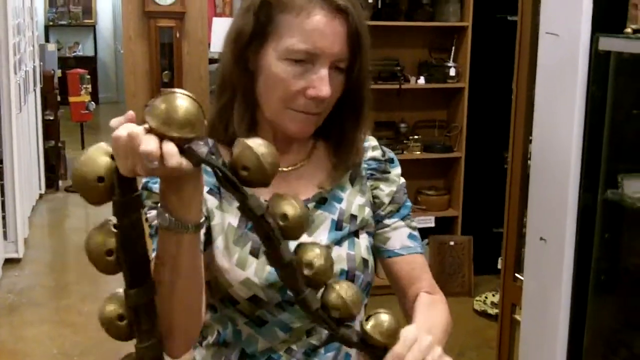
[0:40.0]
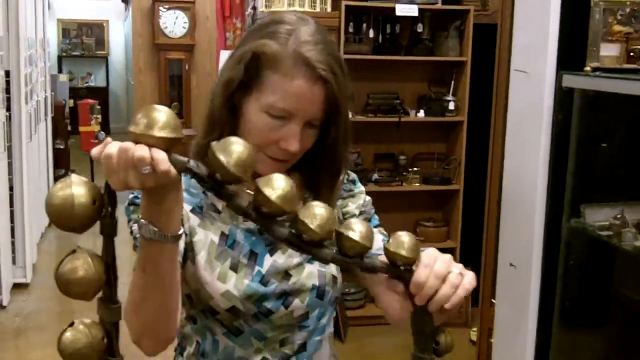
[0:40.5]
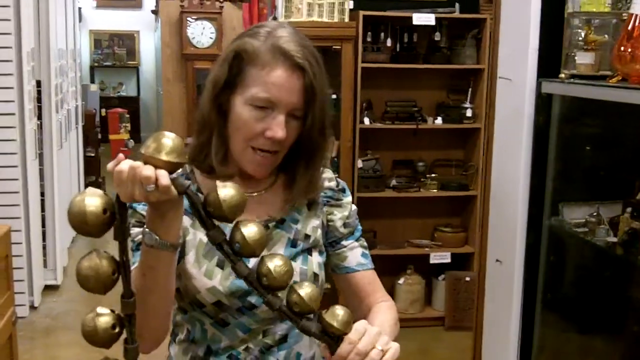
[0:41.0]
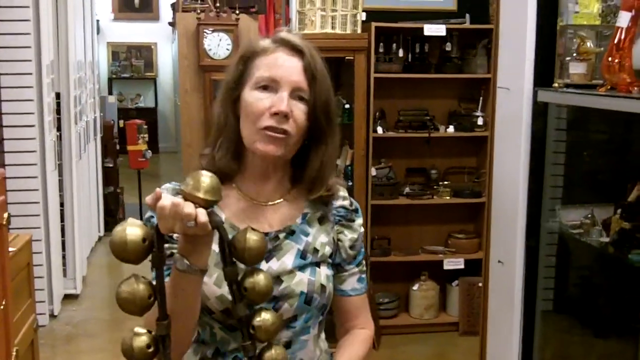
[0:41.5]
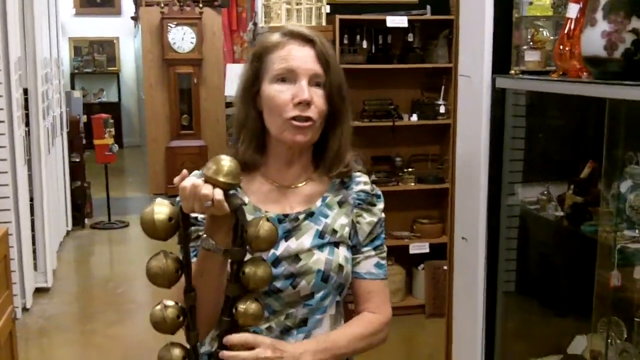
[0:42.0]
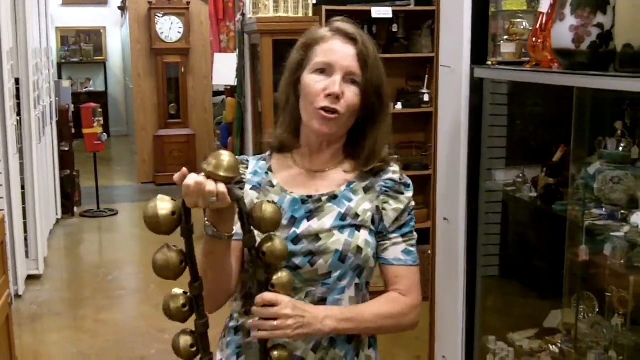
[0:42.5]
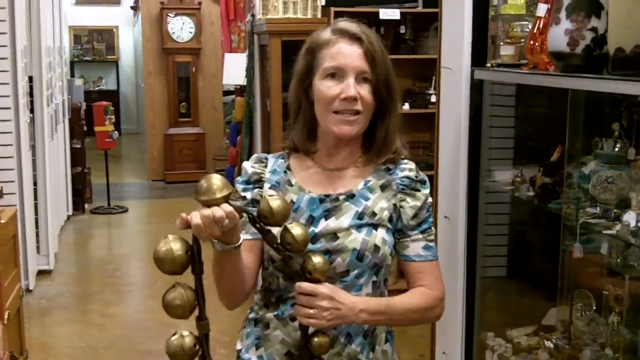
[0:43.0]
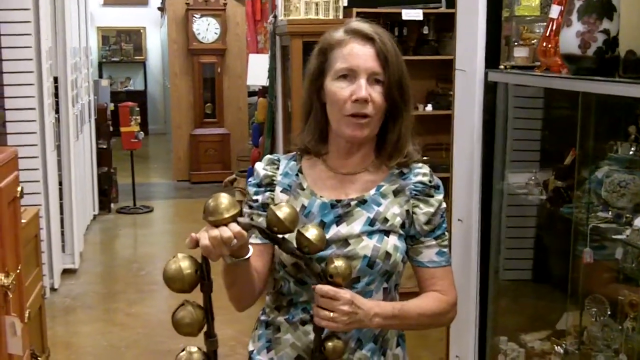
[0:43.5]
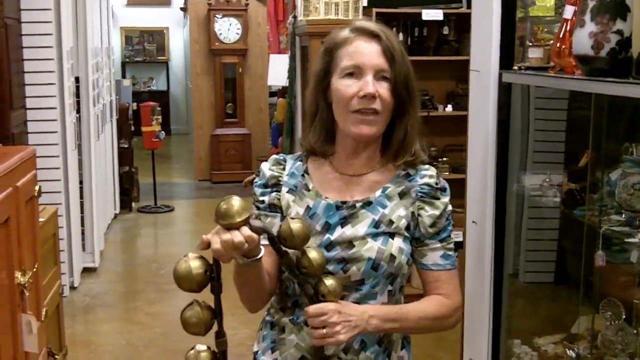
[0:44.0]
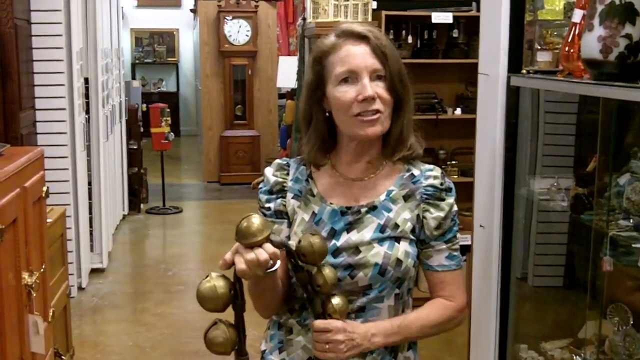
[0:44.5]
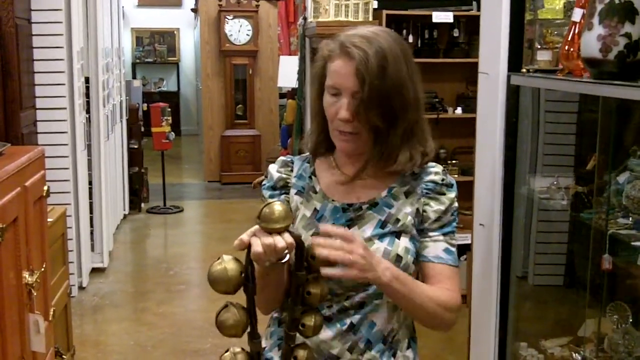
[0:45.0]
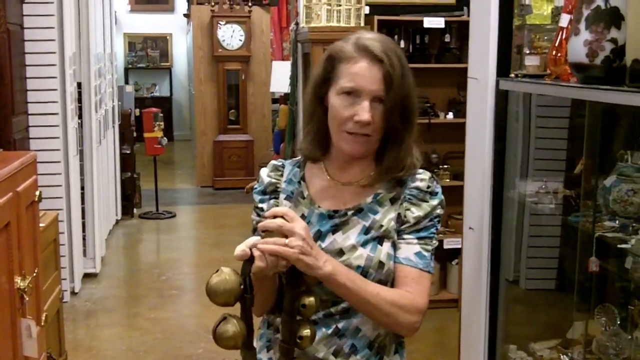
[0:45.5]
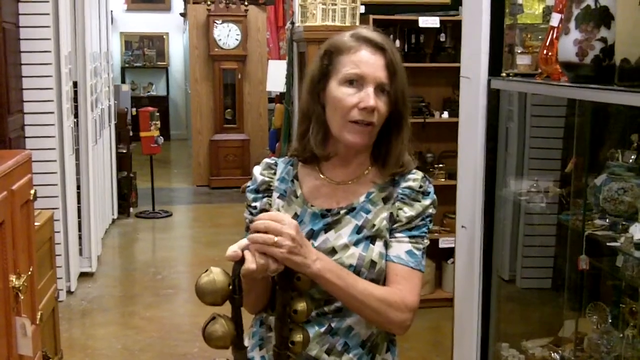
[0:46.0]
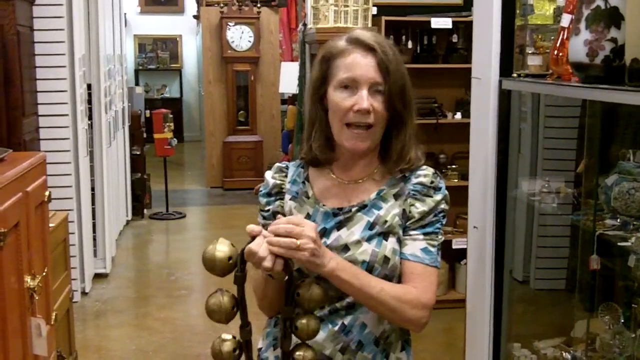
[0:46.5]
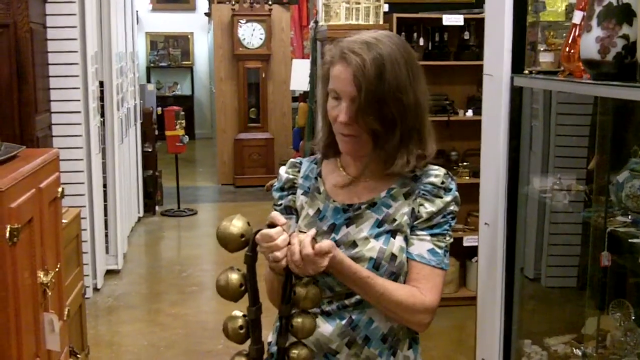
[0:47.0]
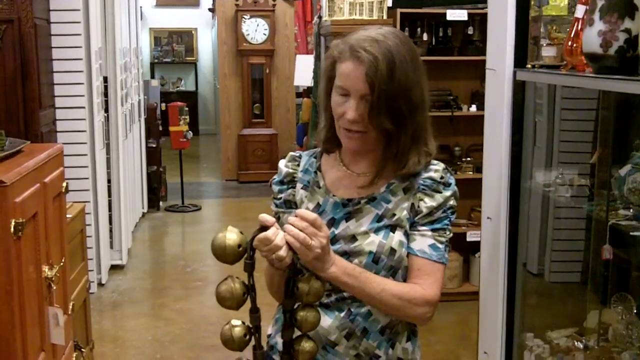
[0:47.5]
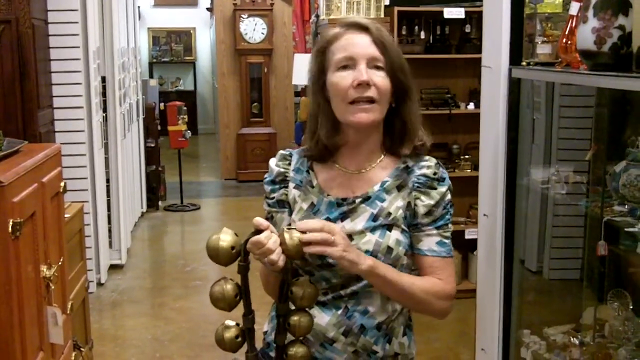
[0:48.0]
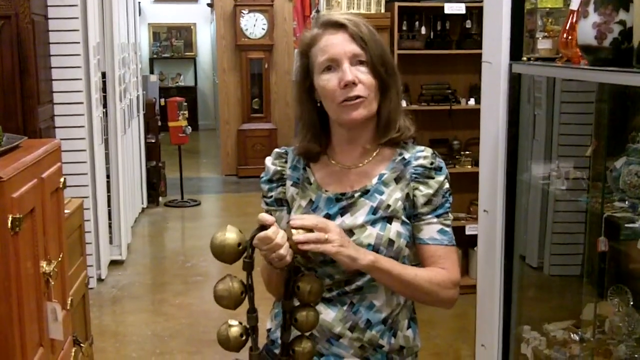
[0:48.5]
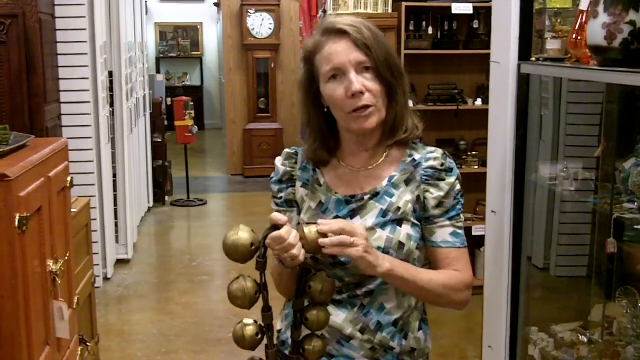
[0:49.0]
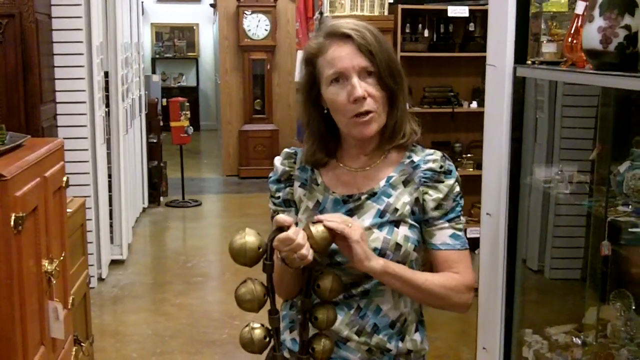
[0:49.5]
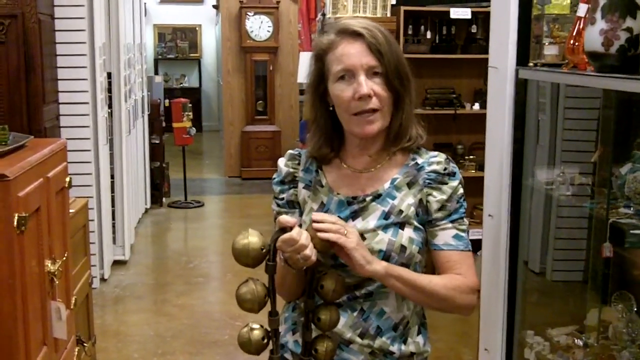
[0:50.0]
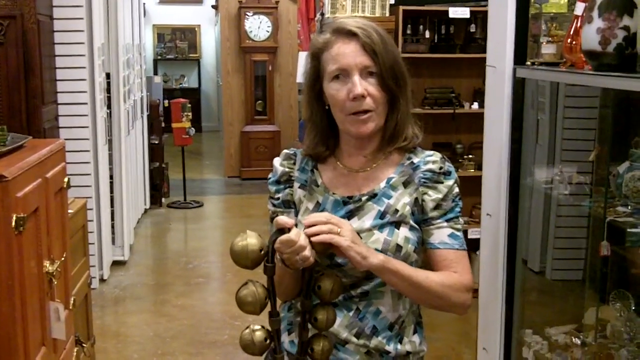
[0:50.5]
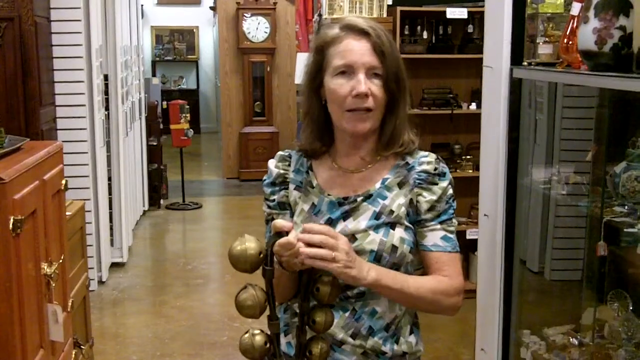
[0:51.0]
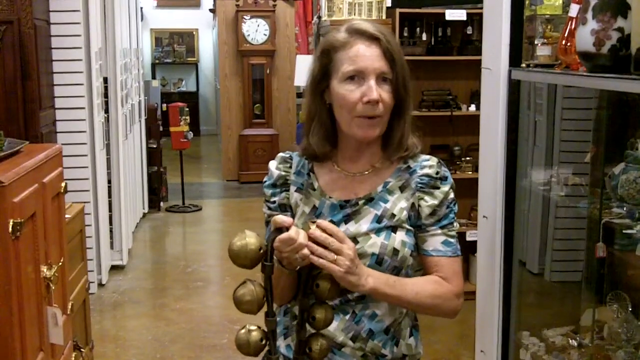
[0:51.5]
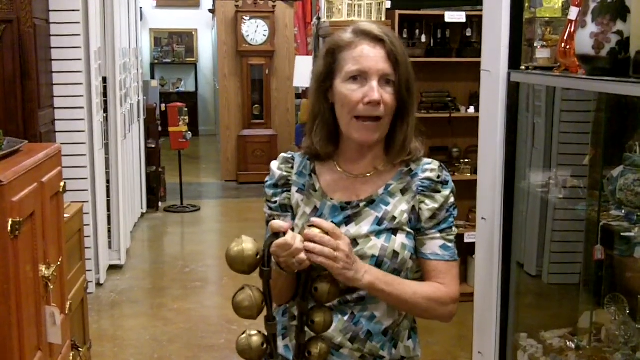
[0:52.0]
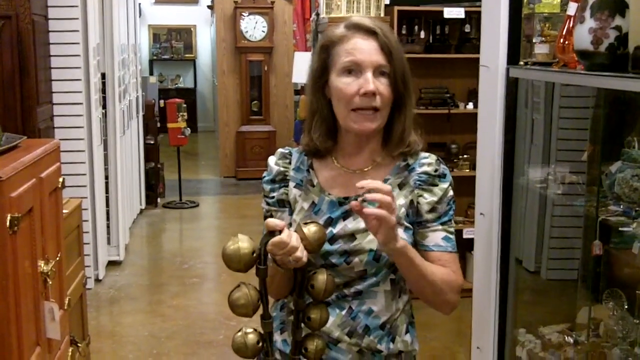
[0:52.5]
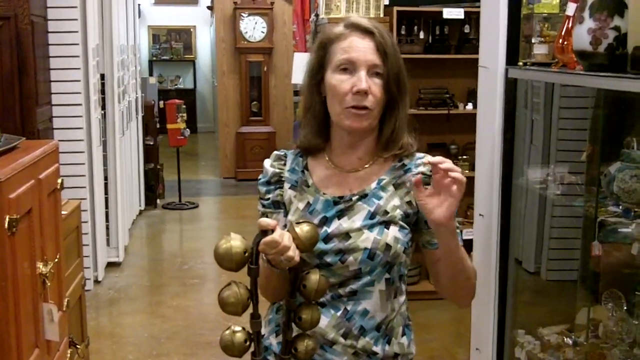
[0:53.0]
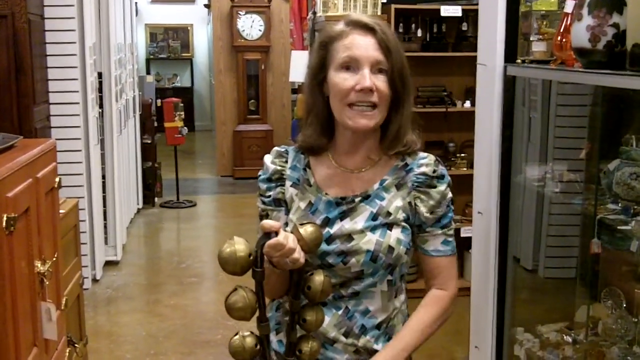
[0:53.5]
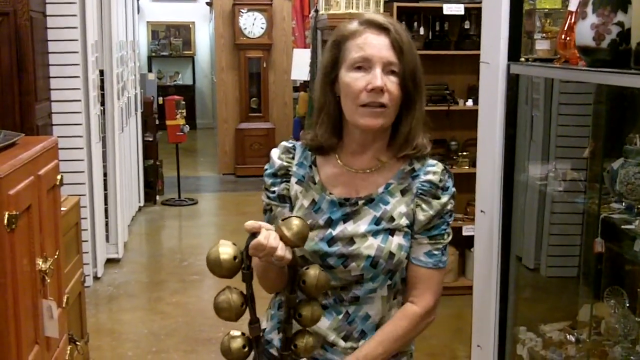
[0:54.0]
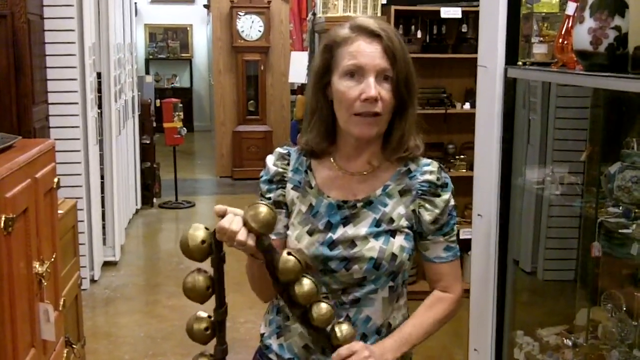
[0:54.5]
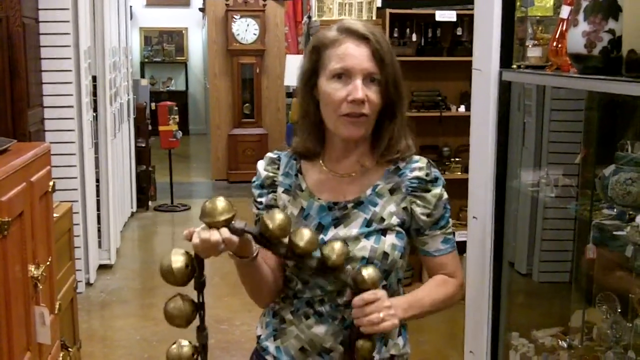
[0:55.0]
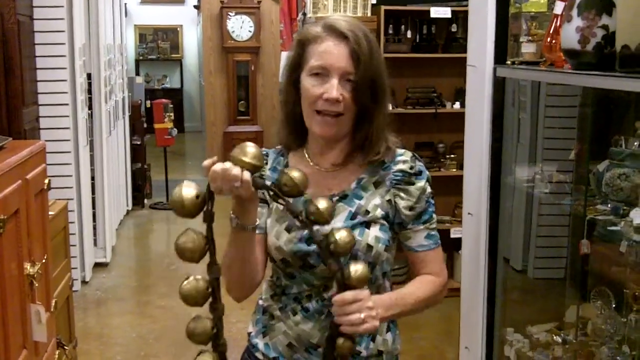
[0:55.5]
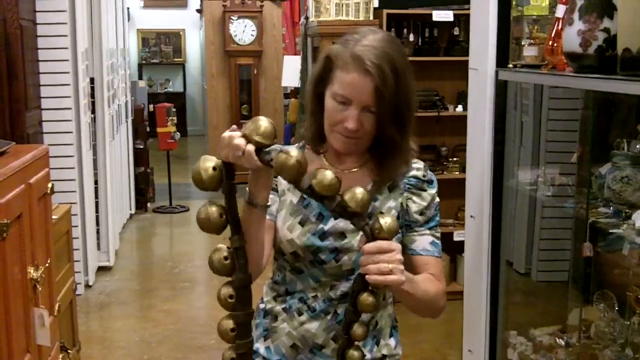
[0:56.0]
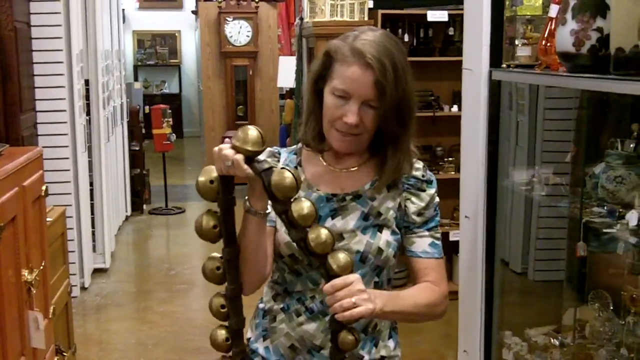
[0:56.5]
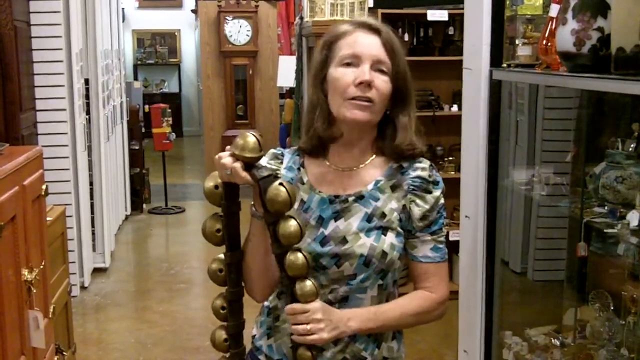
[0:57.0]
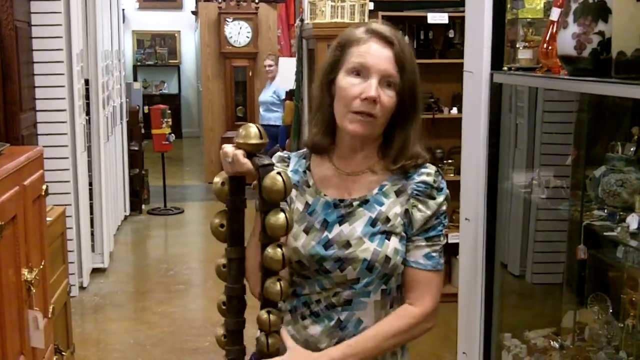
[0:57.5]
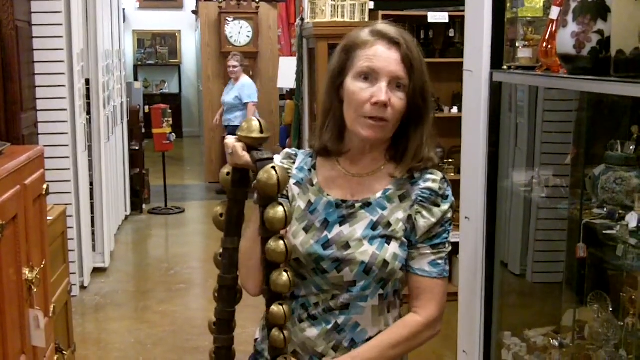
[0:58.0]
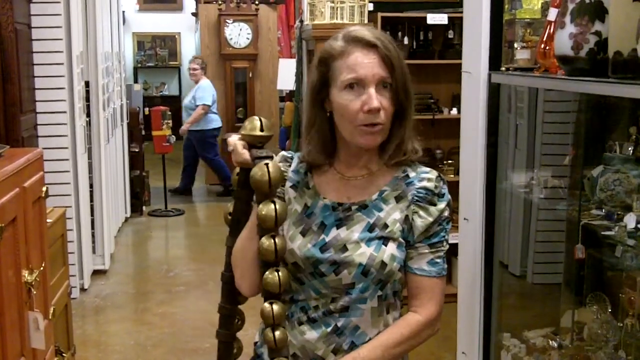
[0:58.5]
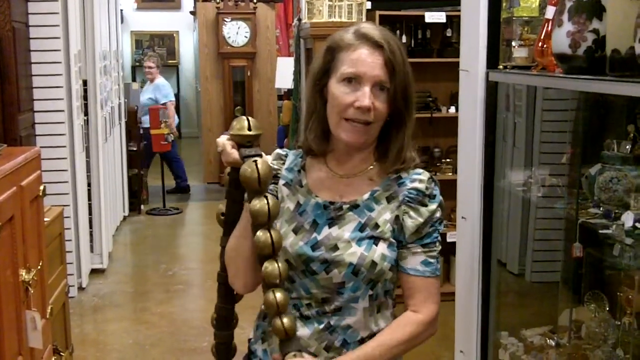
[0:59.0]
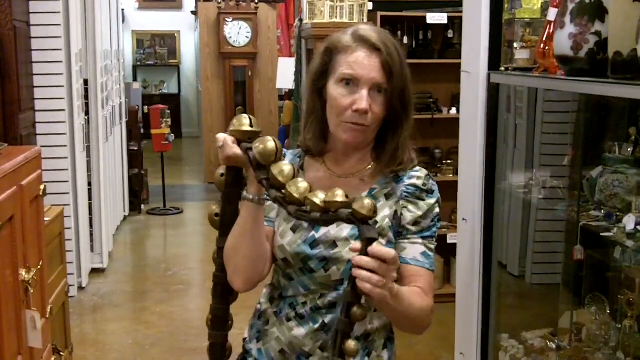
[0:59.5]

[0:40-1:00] A woman with brown hair, wearing a patterned floral top and a necklace, describes a belt with many gold metal balls that she holds in her hand, explaining details about the object. At the end, another woman in blue walks past. A glass box in the shop reflects the white door and has different things inside, and there is a vase on the cabinet. A long clock is behind the woman, and there are various things around the shop. Beside her is a brown cabinet with gold handles, and next to it is another cabinet in another shade of brown, with a darker brown structure on top. A shelf behind her seems to hold metal things, as they are gold in color, along with other items.